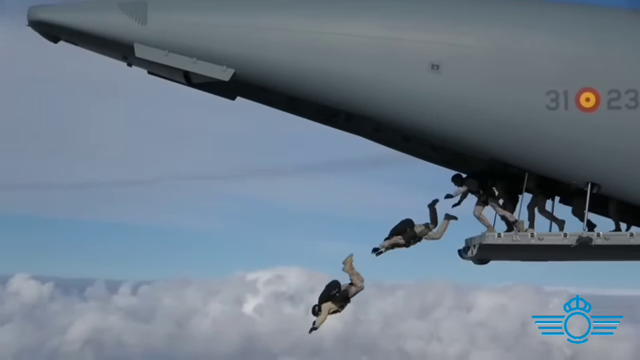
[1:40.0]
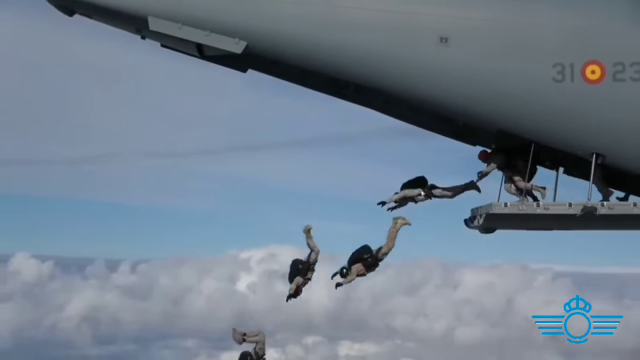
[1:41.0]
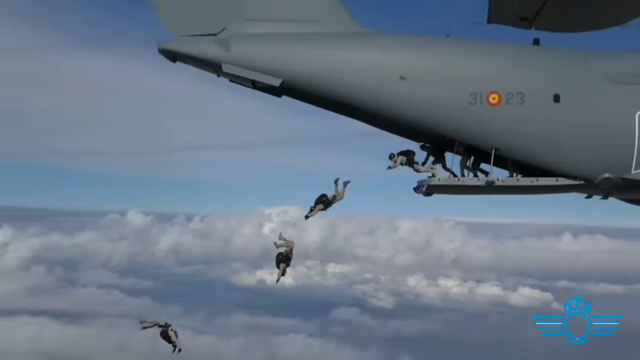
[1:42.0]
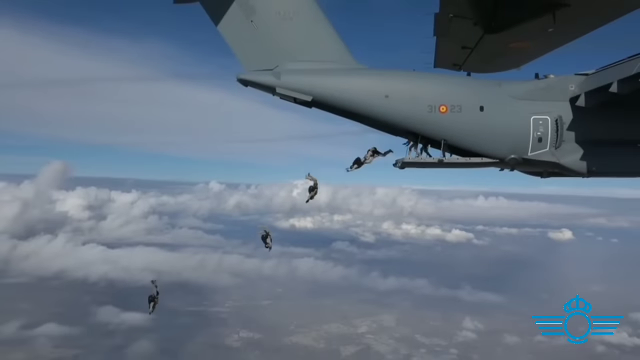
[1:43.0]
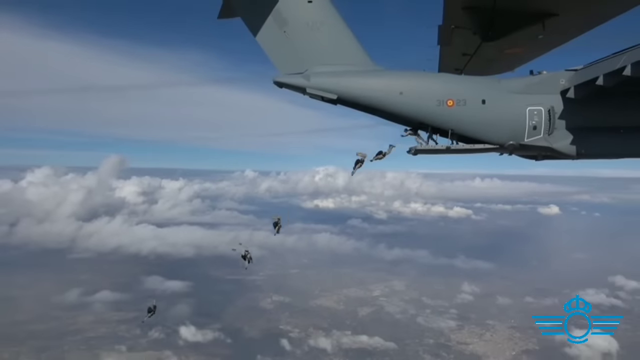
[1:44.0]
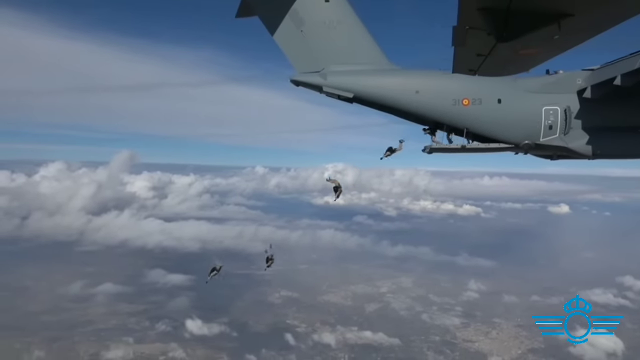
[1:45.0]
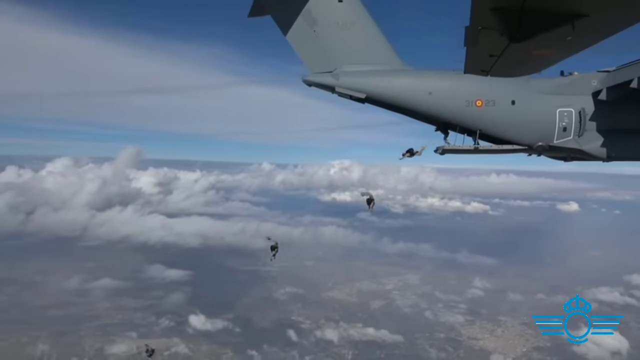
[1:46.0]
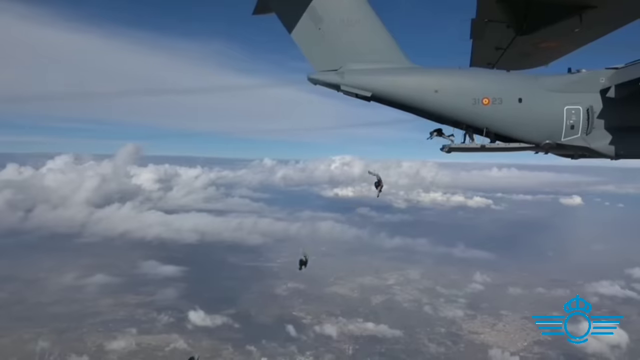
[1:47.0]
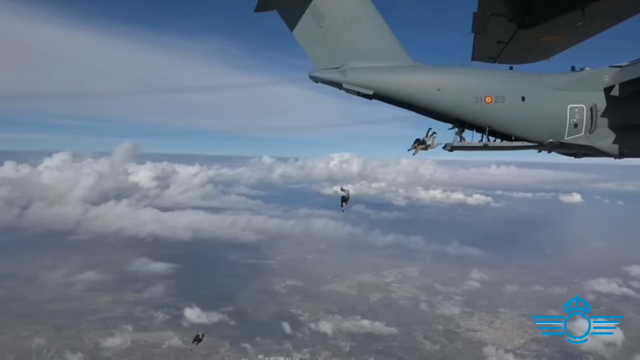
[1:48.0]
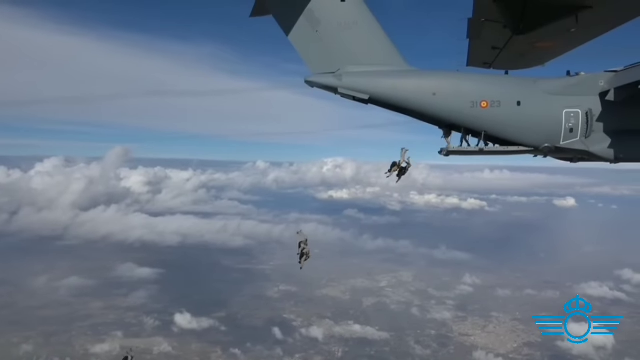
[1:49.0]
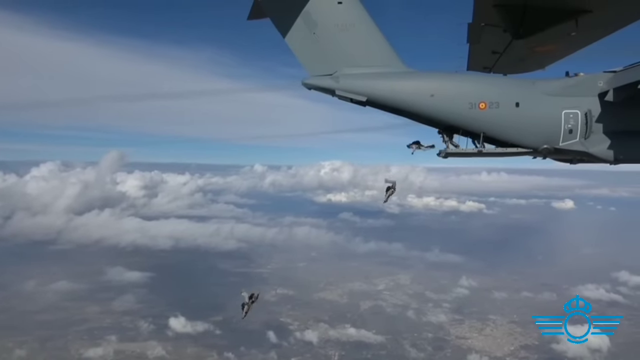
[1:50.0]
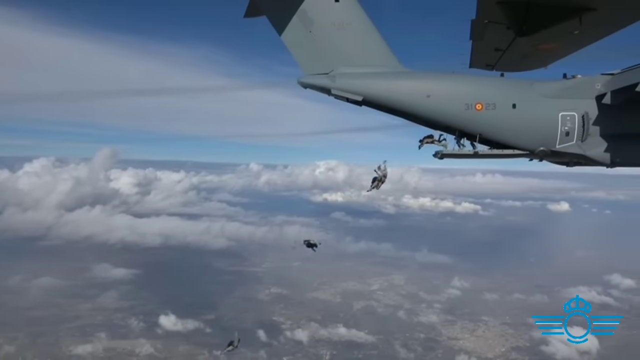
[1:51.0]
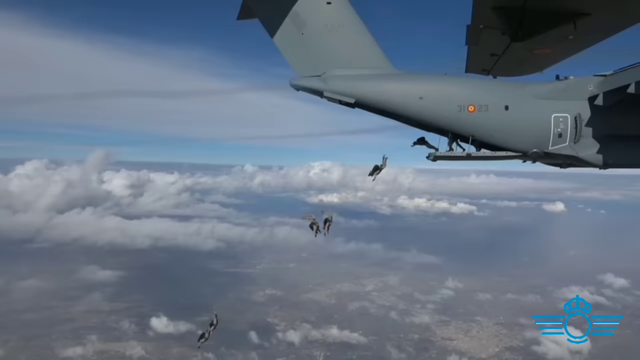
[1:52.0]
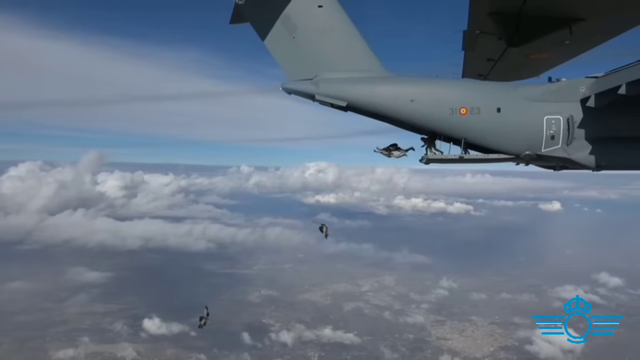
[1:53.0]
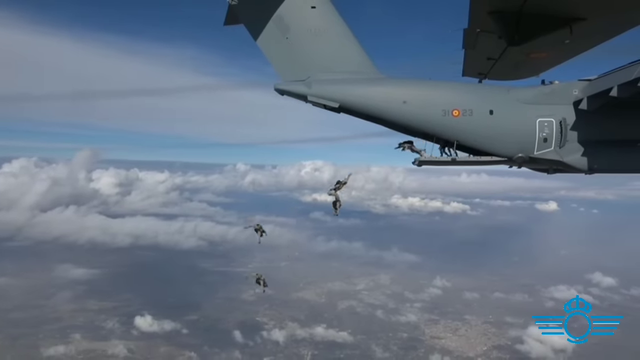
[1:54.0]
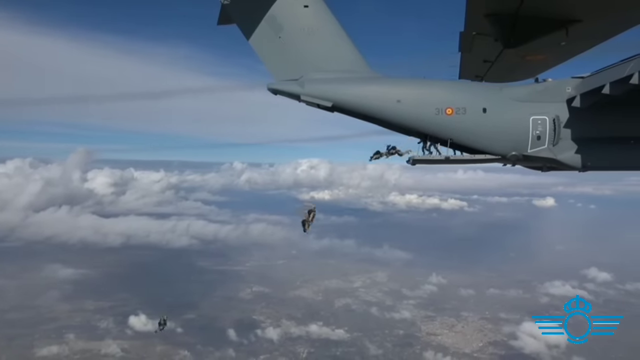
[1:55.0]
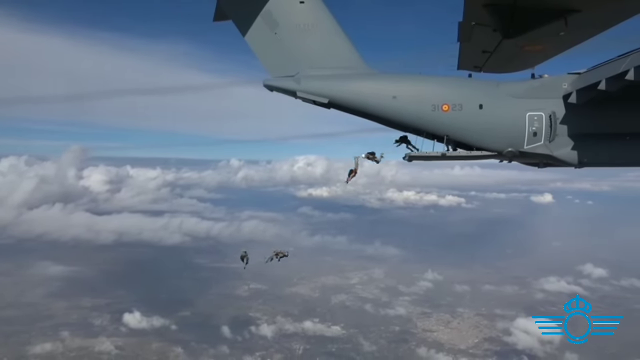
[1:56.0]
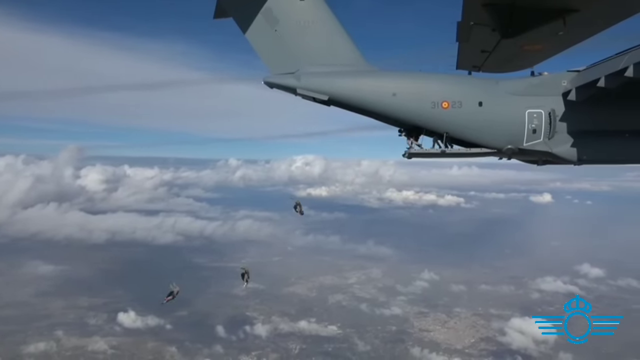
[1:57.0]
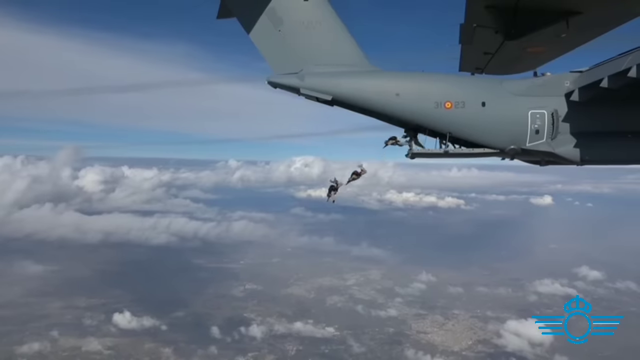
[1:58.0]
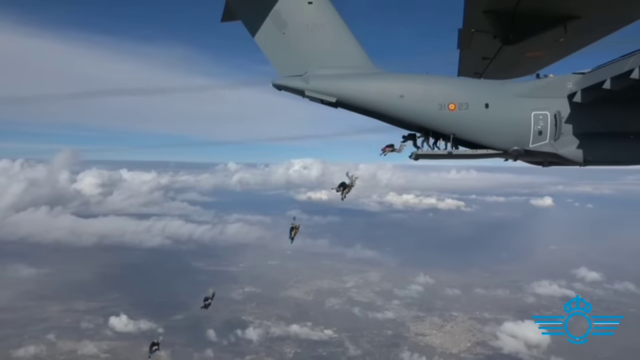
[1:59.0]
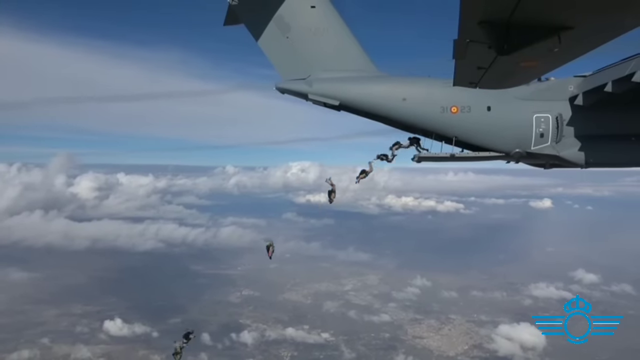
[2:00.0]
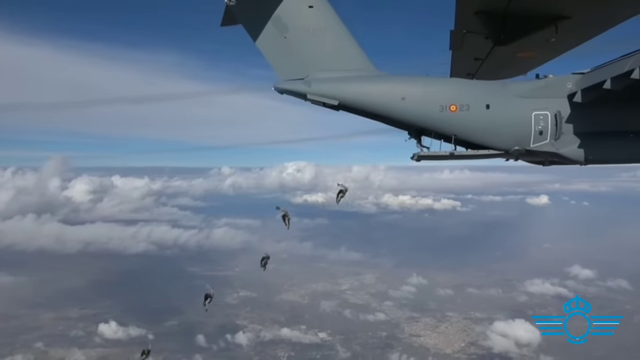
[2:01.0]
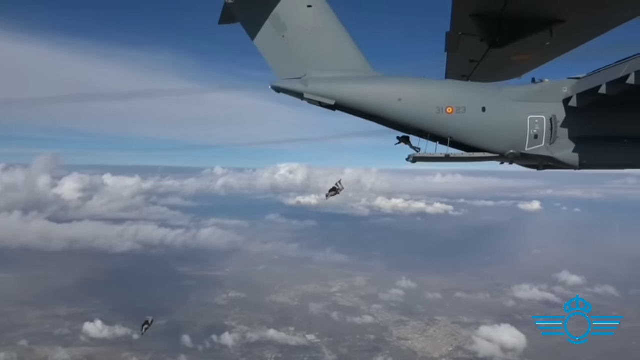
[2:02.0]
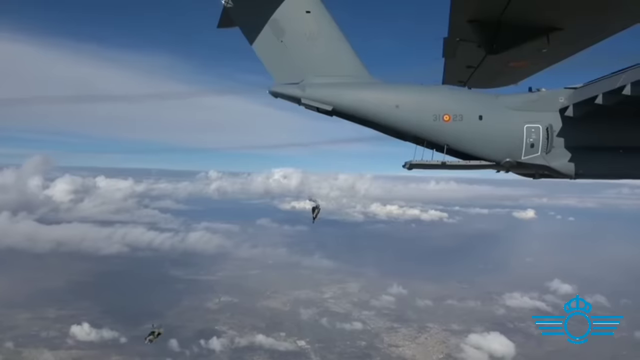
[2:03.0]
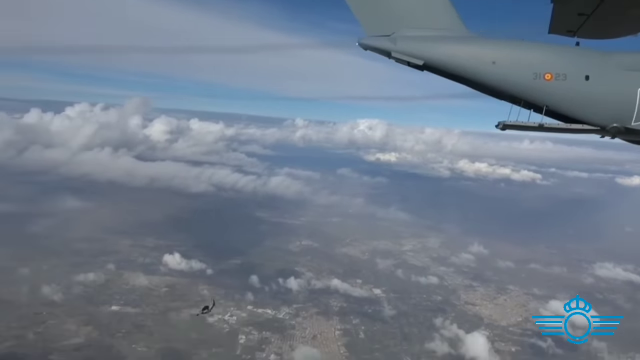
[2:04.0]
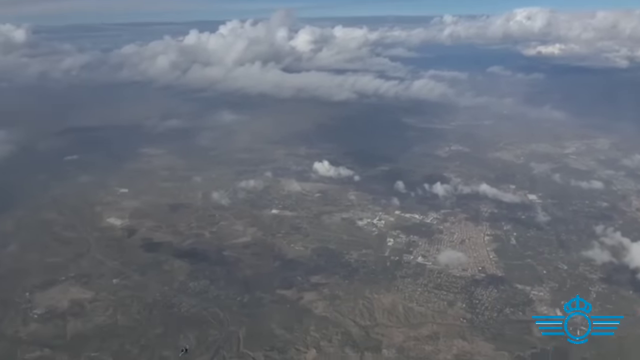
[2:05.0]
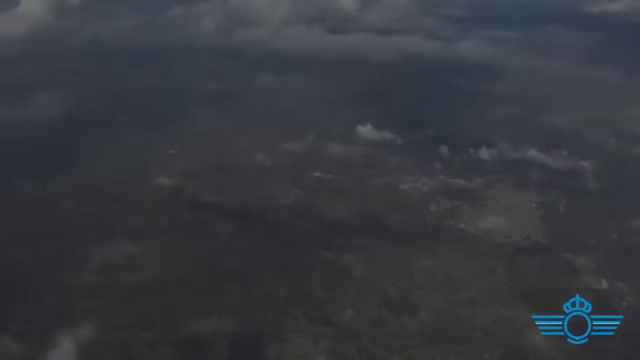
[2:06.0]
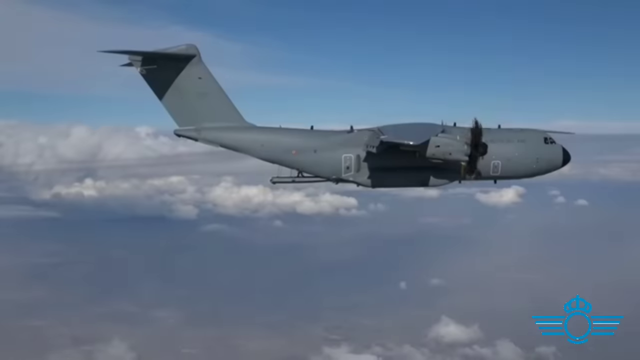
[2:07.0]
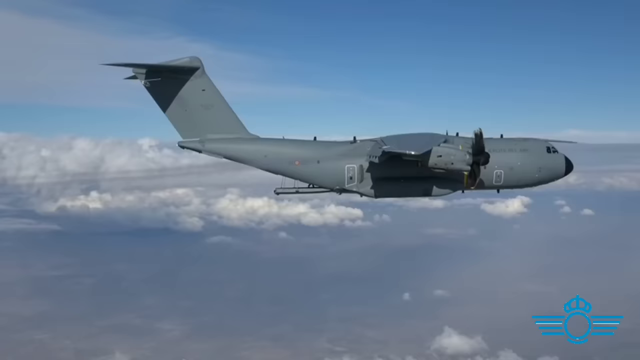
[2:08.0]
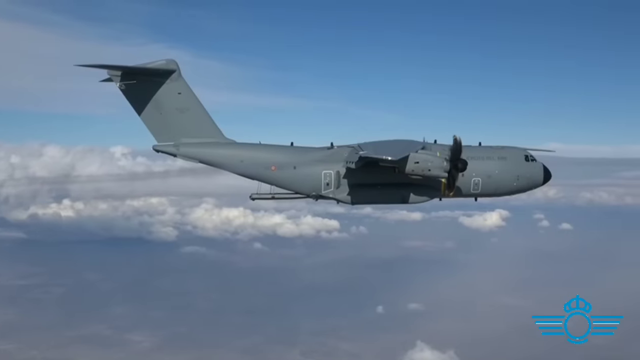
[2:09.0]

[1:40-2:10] The servicemen exit an aircraft as if doing a military jump or skydiving. They wear protective gear including helmets and gloves, and have their backpacks on, which presumably hold their parachutes. They appear to be military paratroopers. The sky in the background is bright and partially cloudy, with lots of fluffy clouds. The airmen are in full protective gear. The plane appears to be at a standstill; even though it is in the air, it does not appear to be moving at all as the airmen exit it quickly and precisely. The view then moves forward to show the front of the plane, the body of the plane, and the propellers moving on its front end.